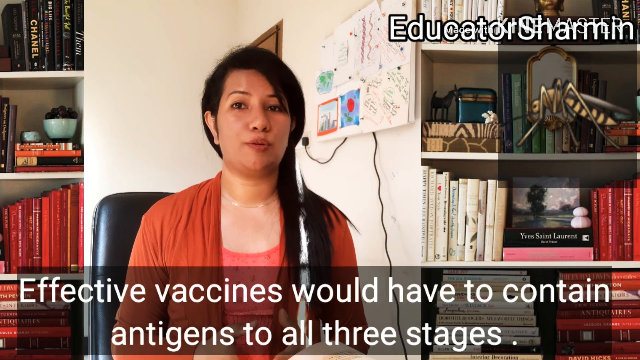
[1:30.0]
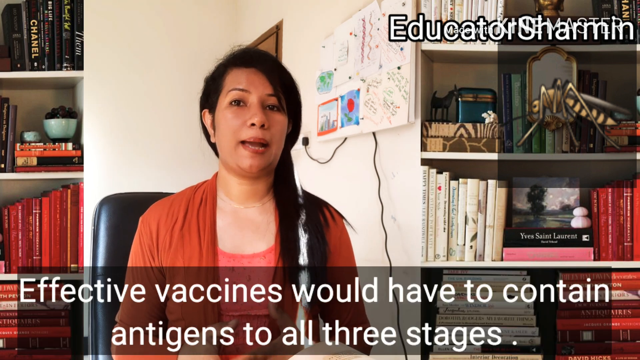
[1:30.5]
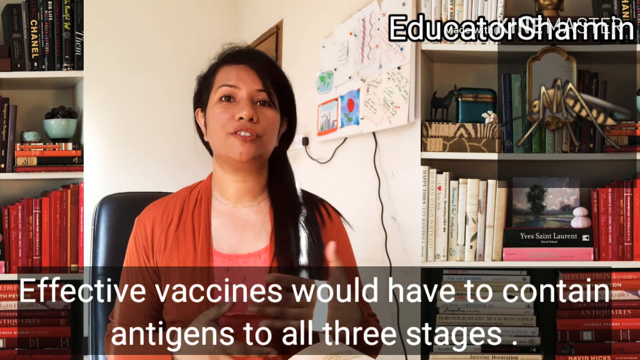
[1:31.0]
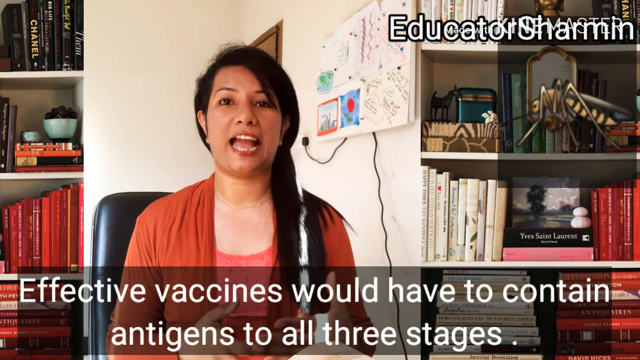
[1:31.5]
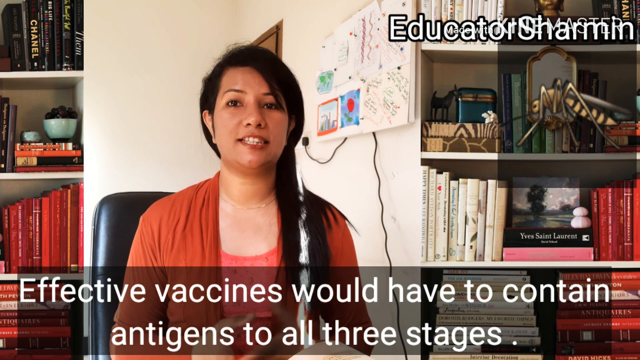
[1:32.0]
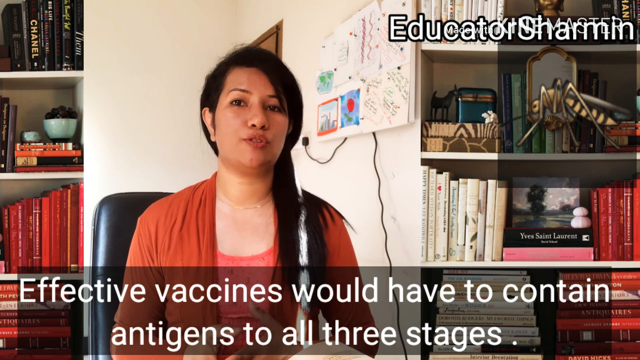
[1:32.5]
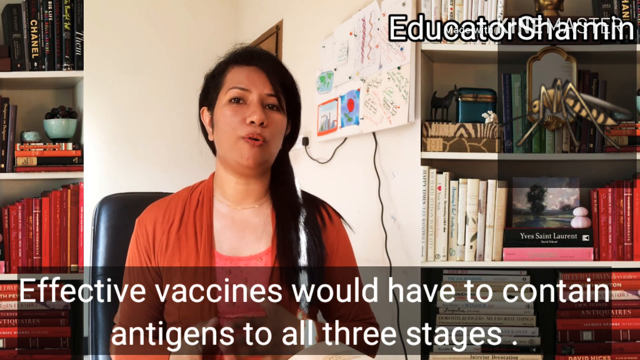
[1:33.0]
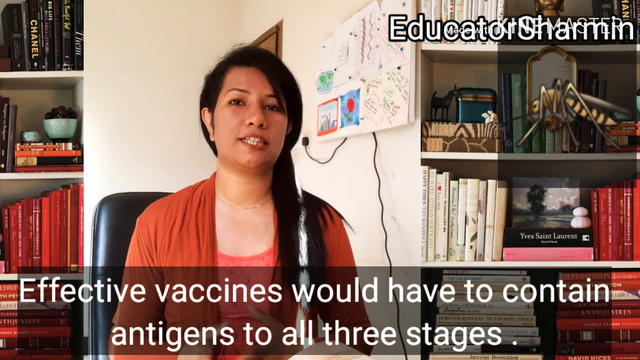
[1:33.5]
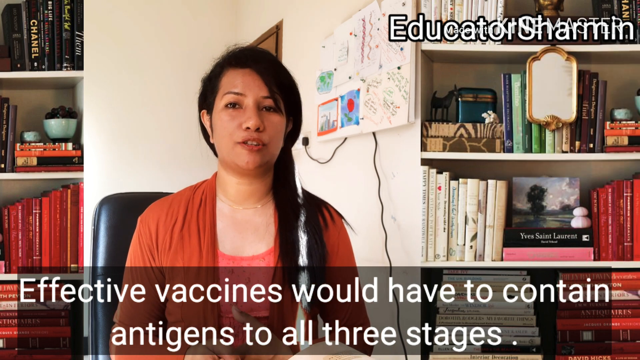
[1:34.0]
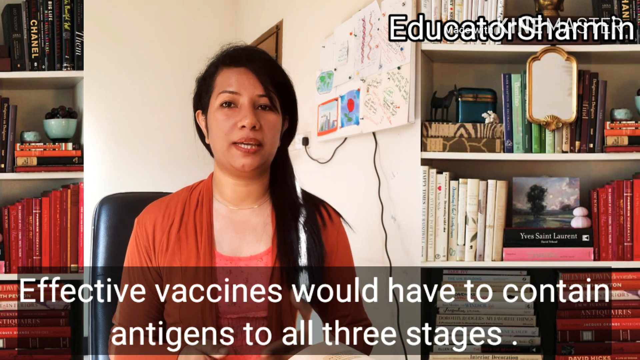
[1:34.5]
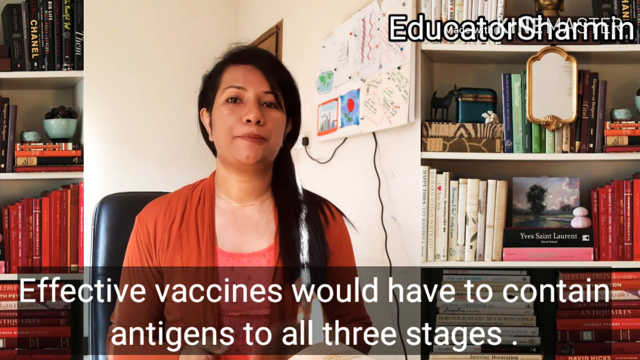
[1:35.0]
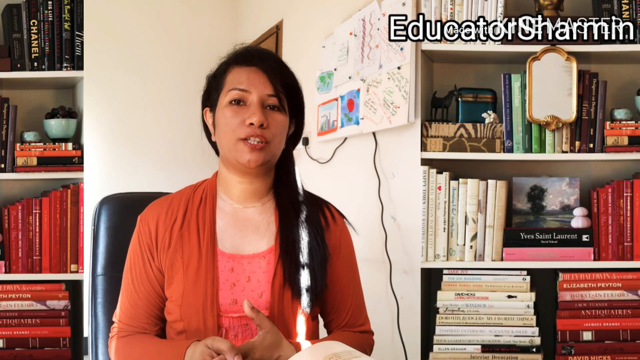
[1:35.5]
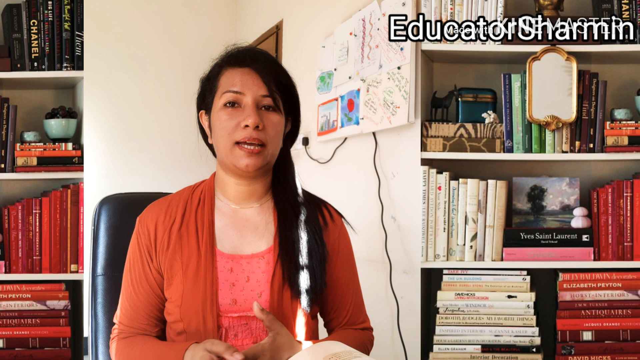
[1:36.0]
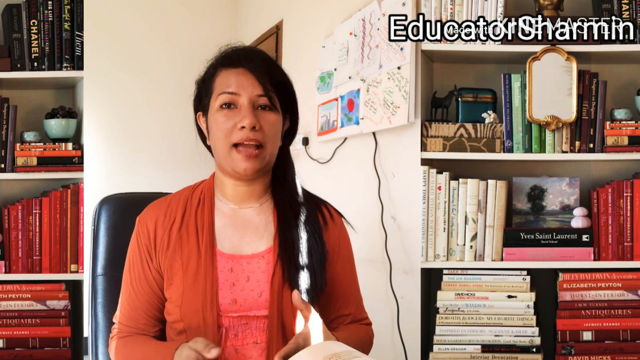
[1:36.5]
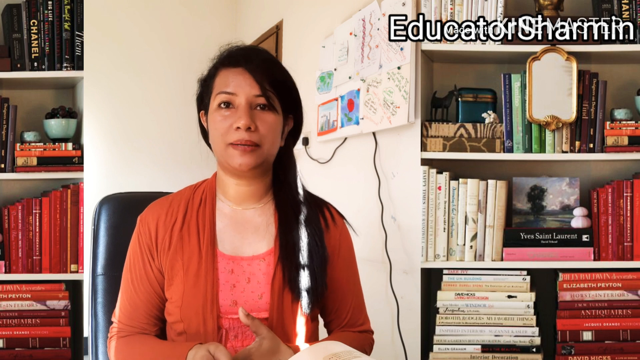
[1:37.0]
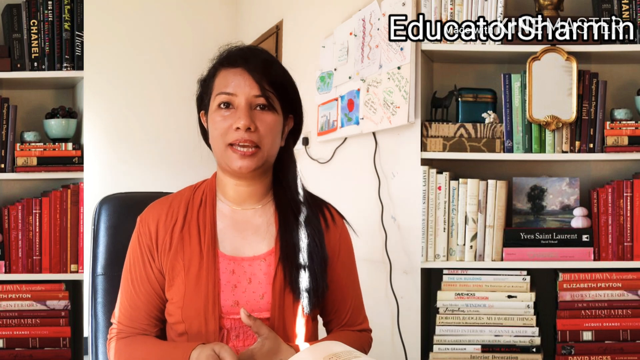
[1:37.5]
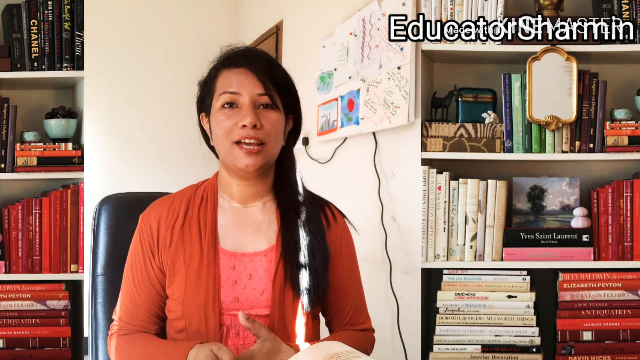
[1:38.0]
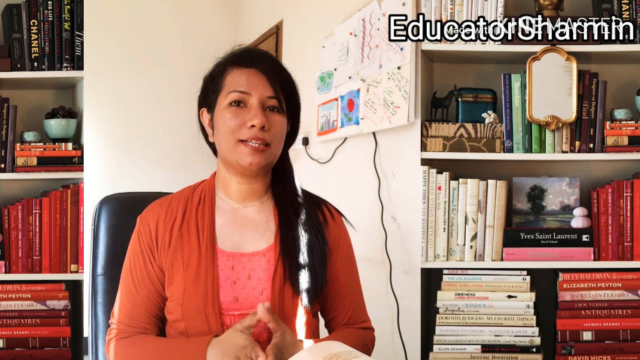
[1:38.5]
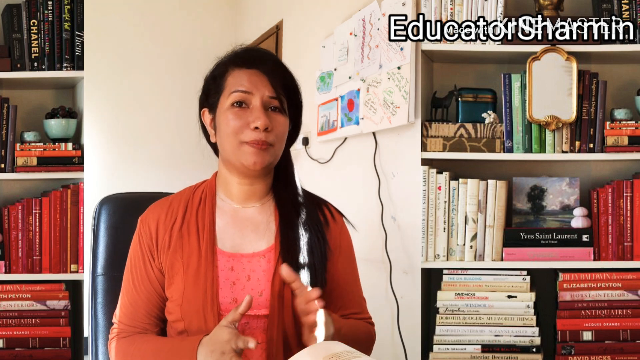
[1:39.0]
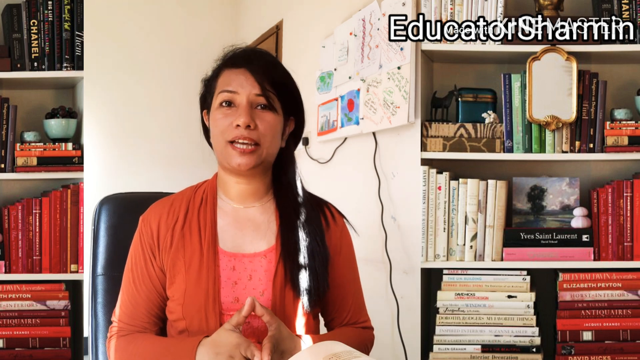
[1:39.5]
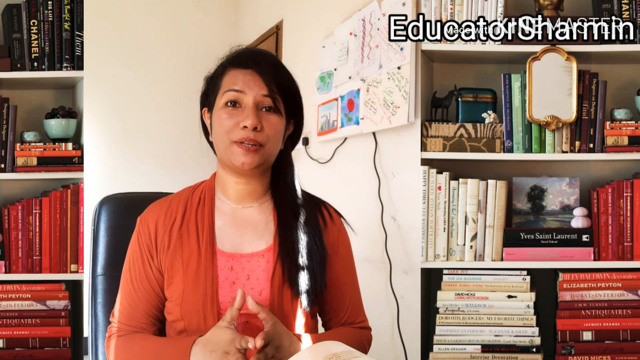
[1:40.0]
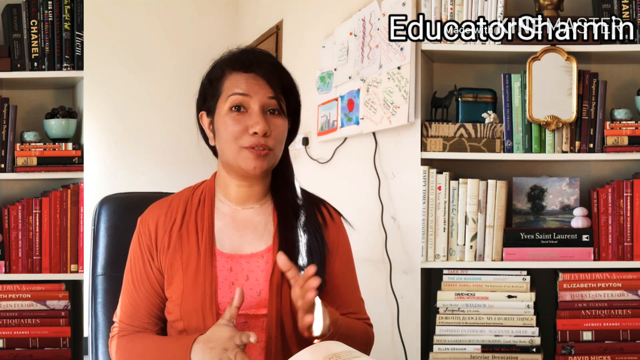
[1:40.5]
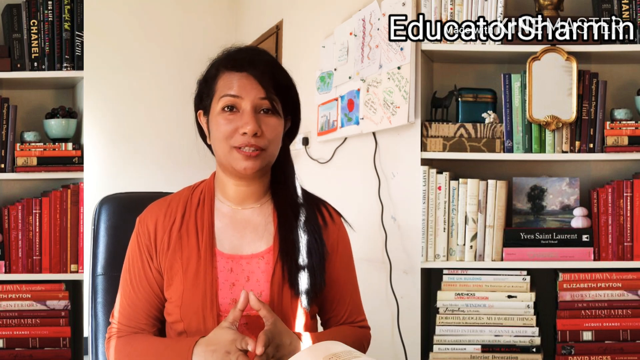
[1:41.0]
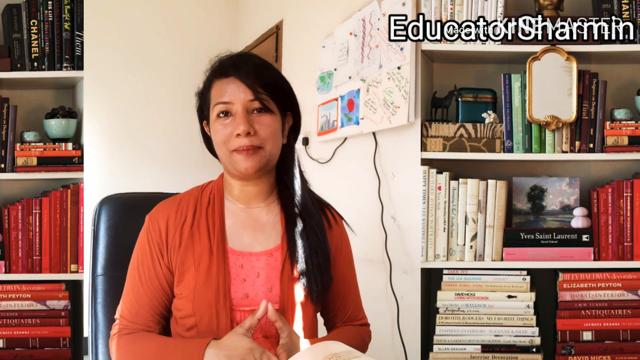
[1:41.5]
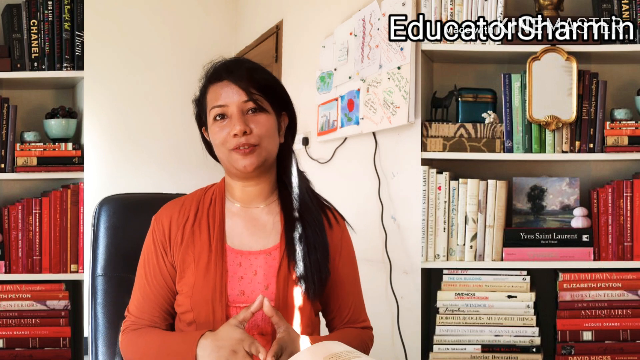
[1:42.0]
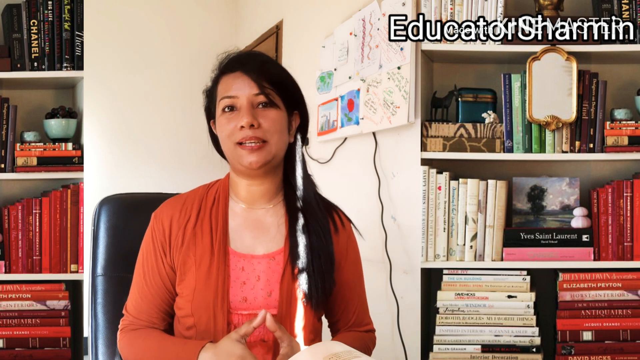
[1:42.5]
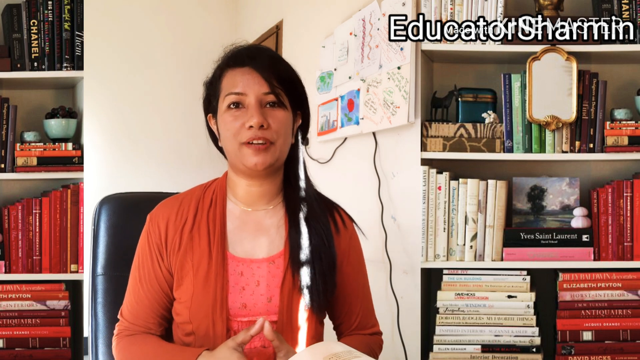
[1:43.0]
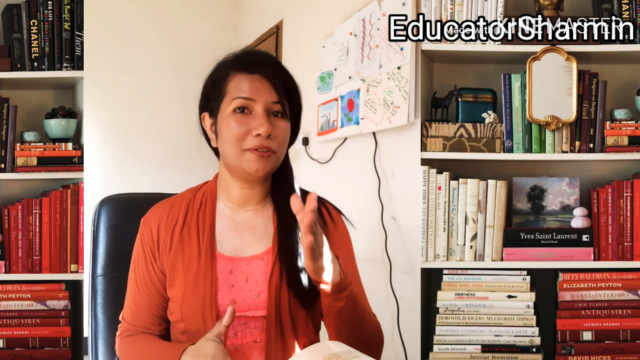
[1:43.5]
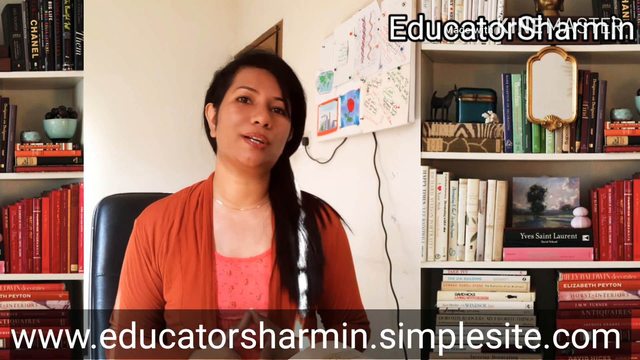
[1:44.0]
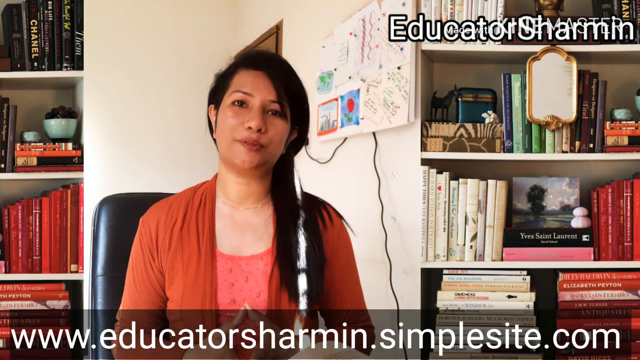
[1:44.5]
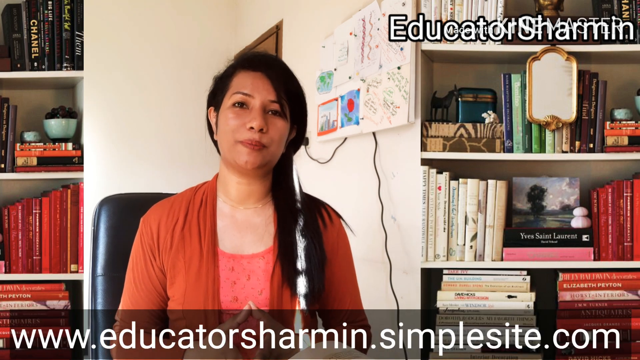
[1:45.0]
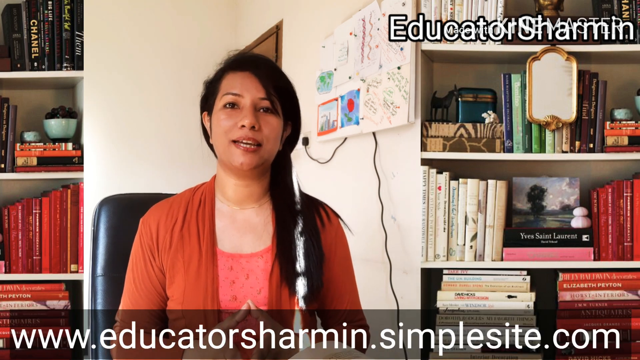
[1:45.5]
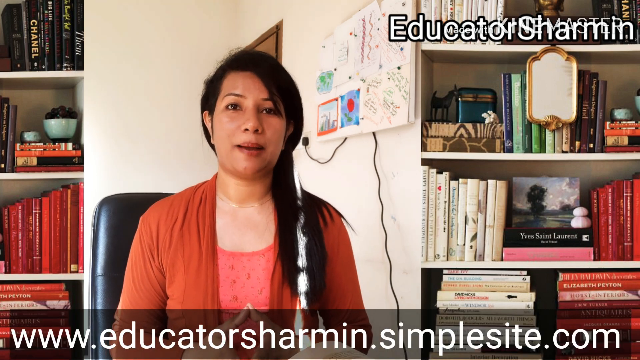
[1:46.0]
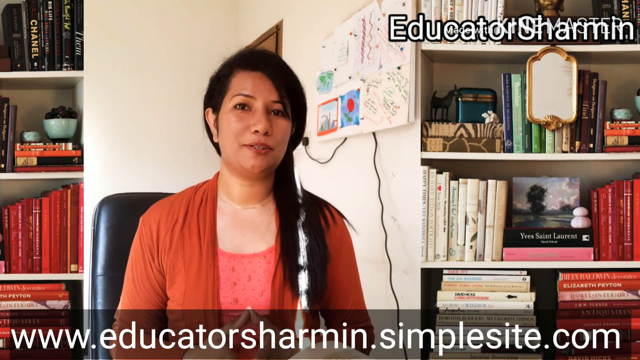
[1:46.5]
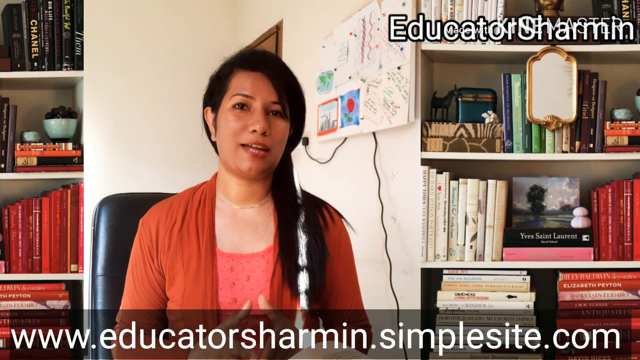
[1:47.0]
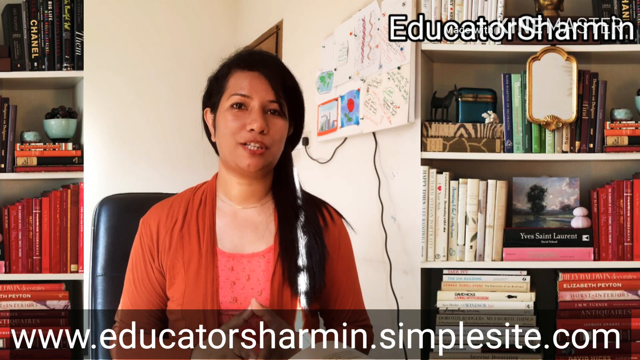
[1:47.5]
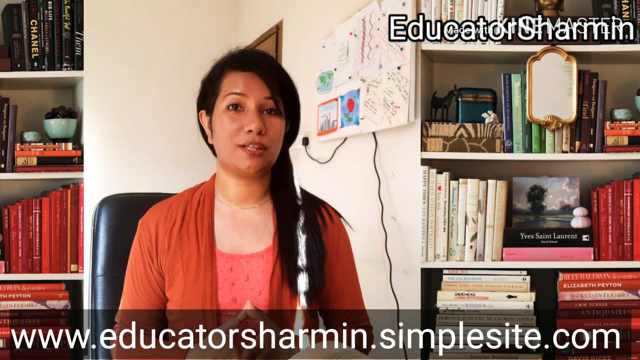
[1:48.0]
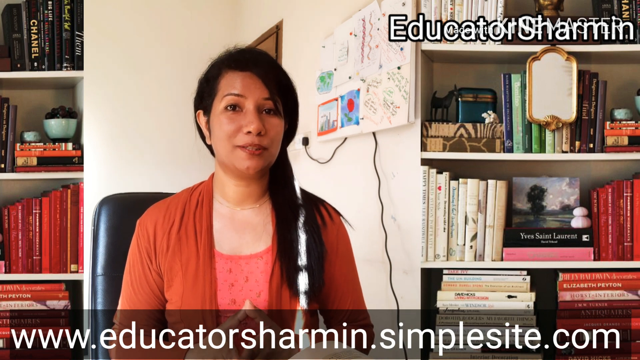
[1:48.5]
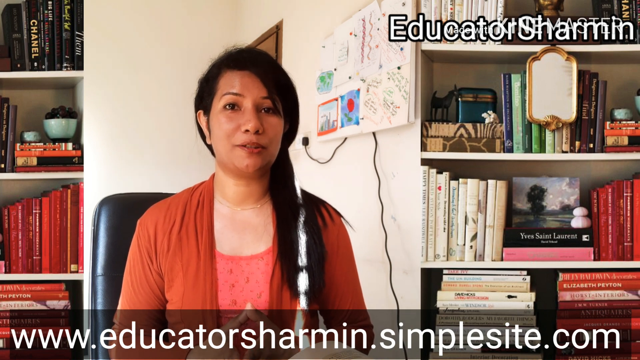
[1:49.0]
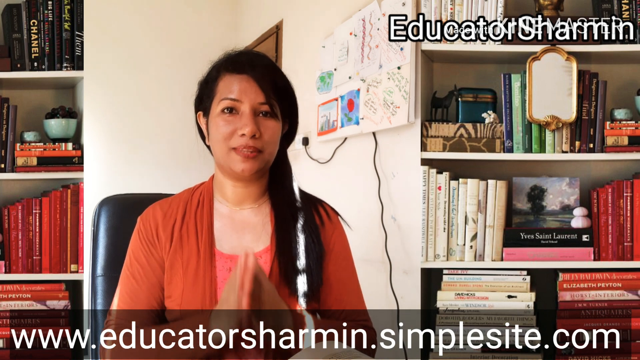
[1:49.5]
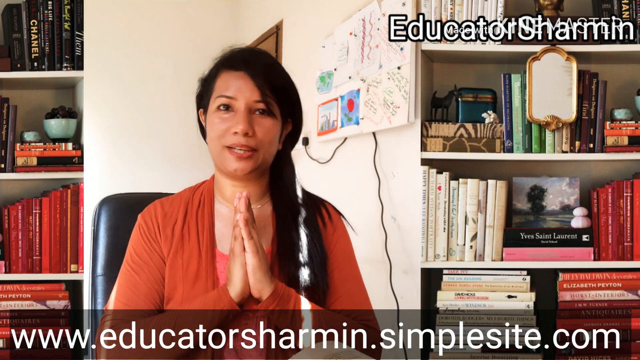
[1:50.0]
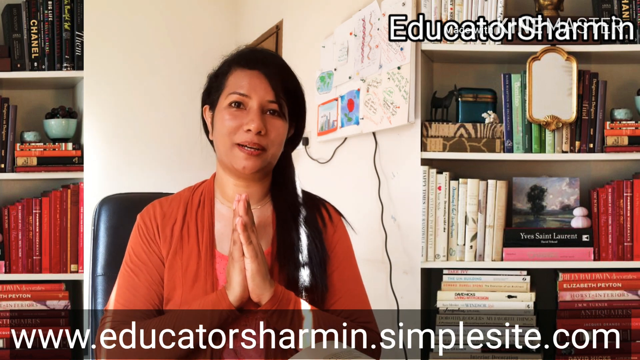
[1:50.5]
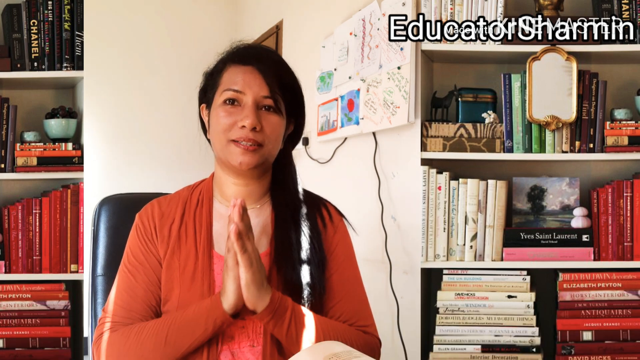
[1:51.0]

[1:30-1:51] A middle-aged woman sits in a black office chair in a brightly lit room with two bookshelves and a whiteboard on the wall behind her. All the books on both bookshelves are organized by color. She has long black hair and wears a pink blouse with an orange jacket. Behind her is a brown door. The whiteboard has documents and pictures on it, and a long black wire is under the whiteboard. Text on screen reads "Effective vaccines would have to contain antigens to all three stages." On the right side of the screen, in front of the right bookshelf, is an animated picture of a wasp. The top right of the video reads "EducatorSharmin." The video ends with a URL reading "www.educatorscharmin.simplesite.com."